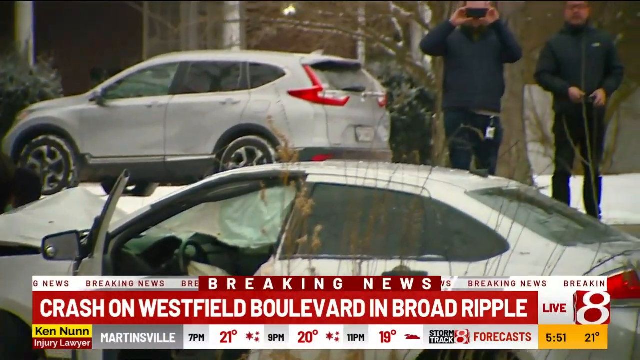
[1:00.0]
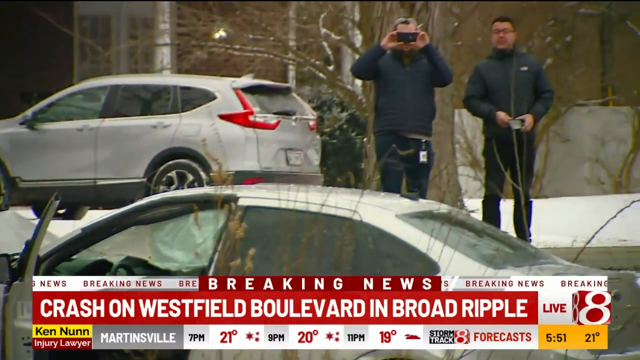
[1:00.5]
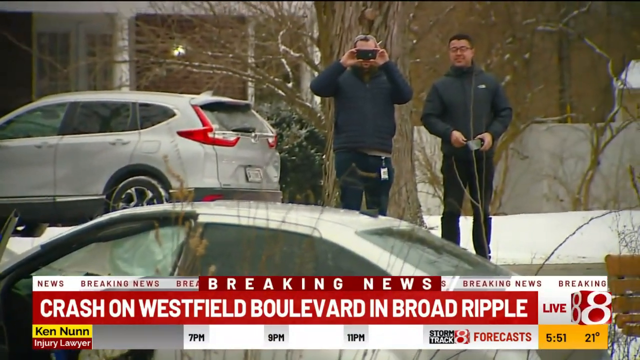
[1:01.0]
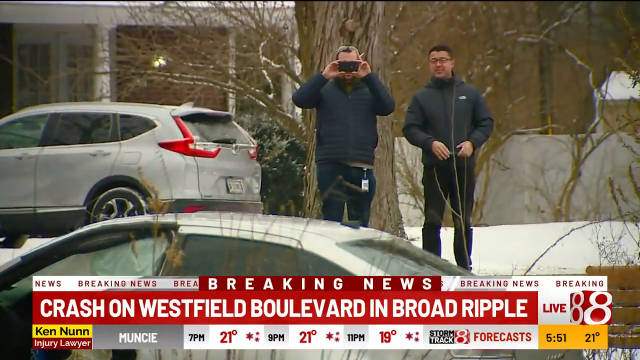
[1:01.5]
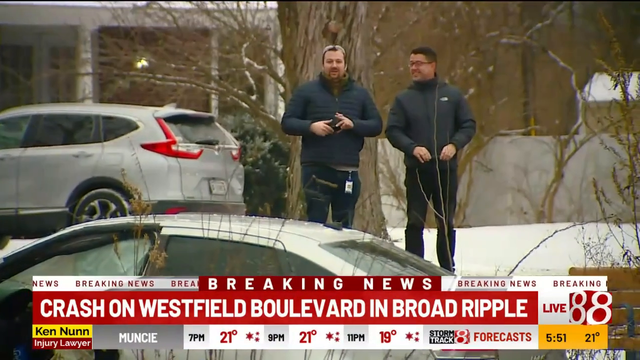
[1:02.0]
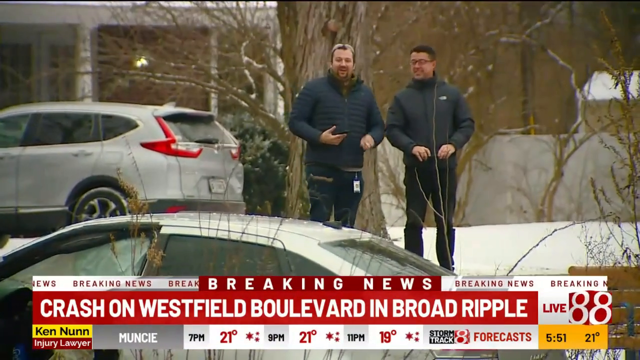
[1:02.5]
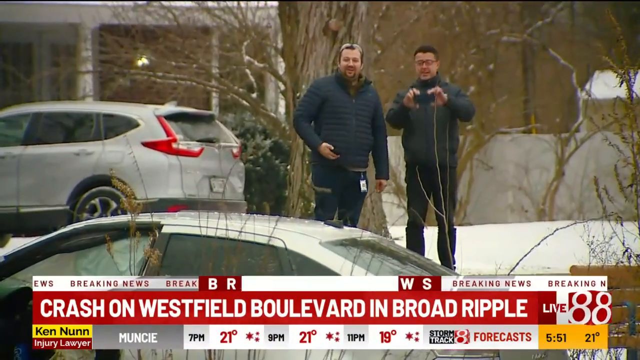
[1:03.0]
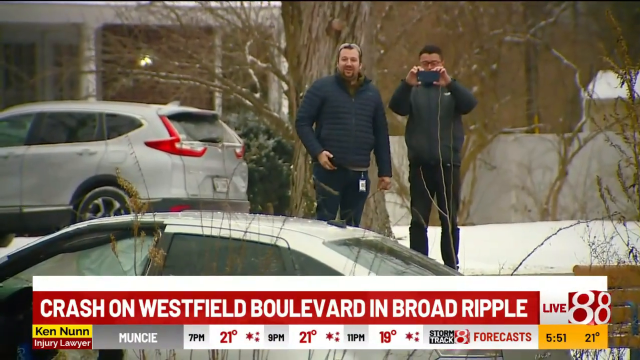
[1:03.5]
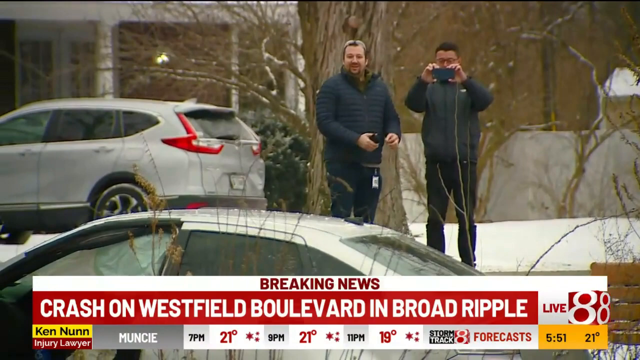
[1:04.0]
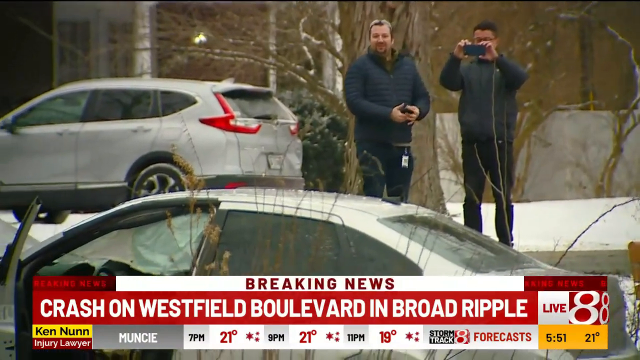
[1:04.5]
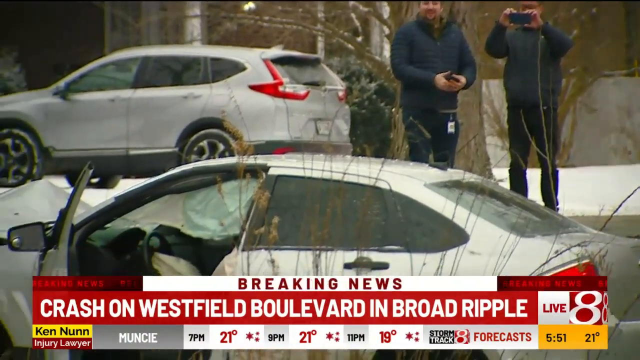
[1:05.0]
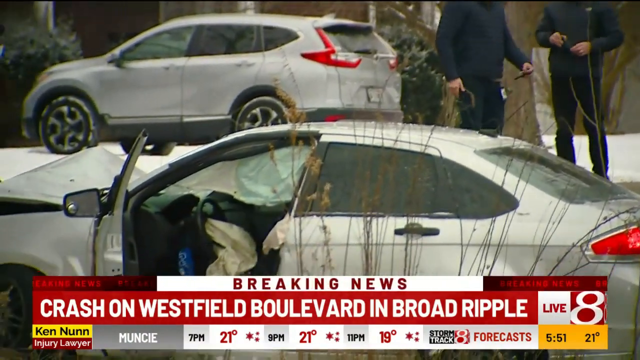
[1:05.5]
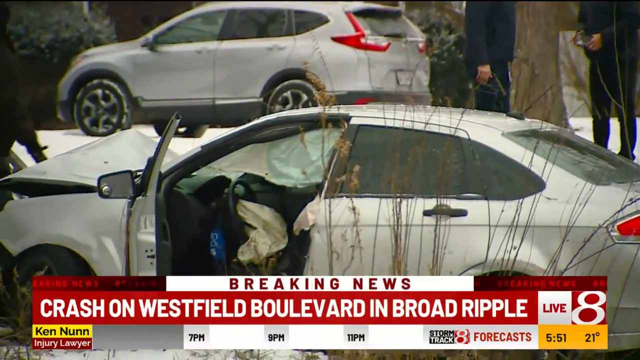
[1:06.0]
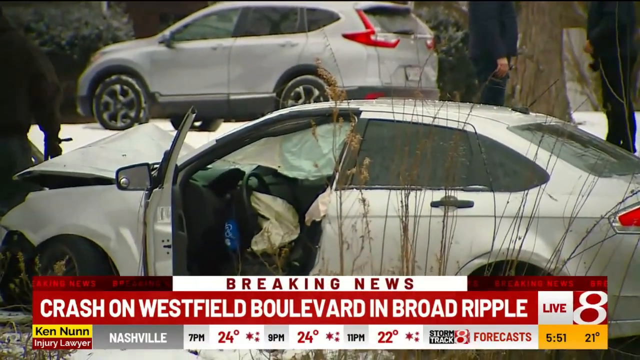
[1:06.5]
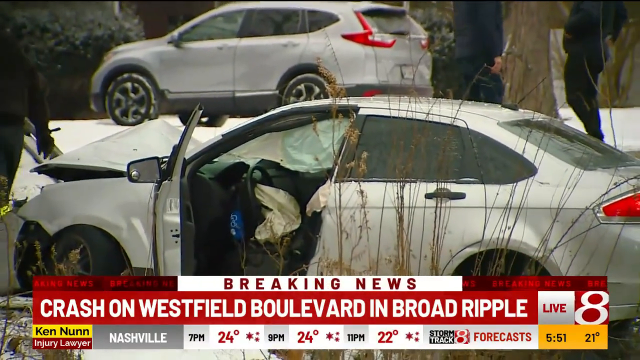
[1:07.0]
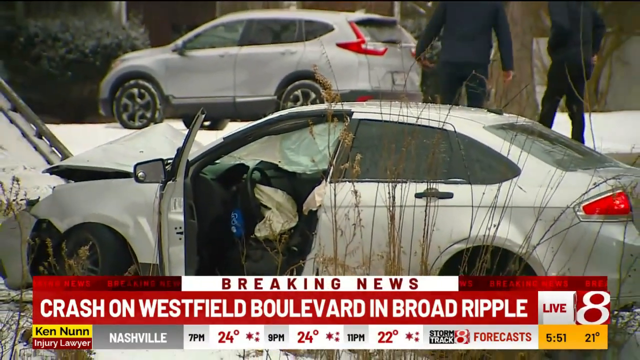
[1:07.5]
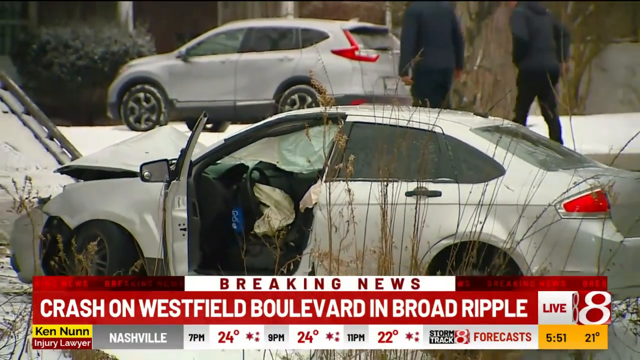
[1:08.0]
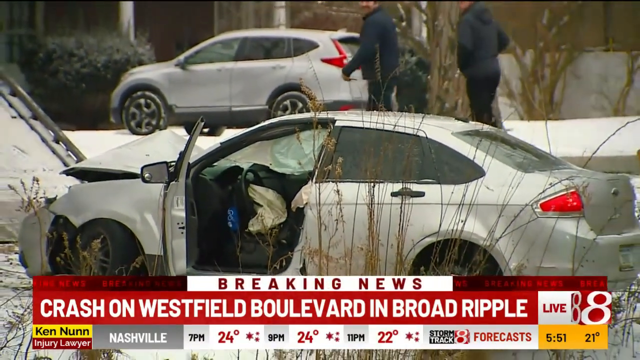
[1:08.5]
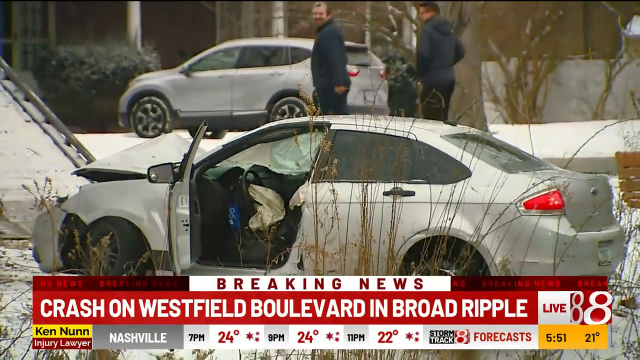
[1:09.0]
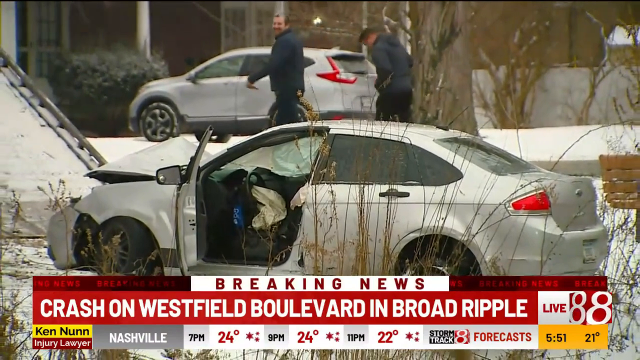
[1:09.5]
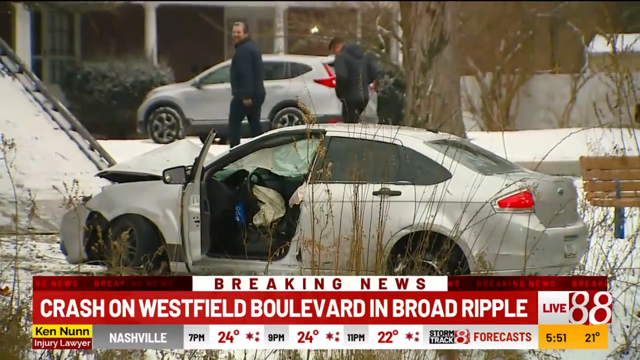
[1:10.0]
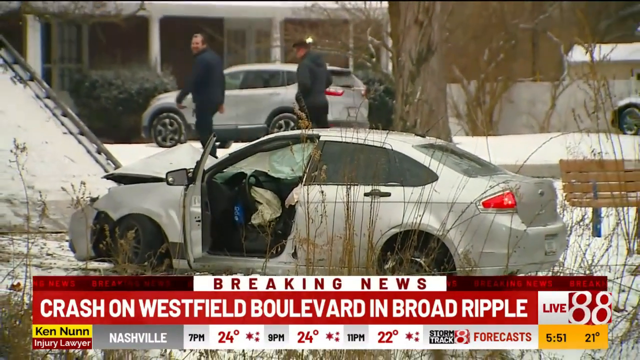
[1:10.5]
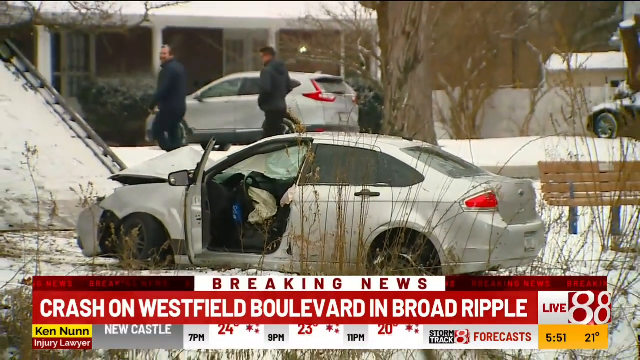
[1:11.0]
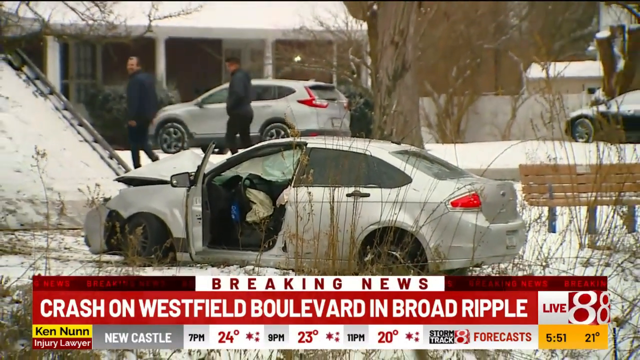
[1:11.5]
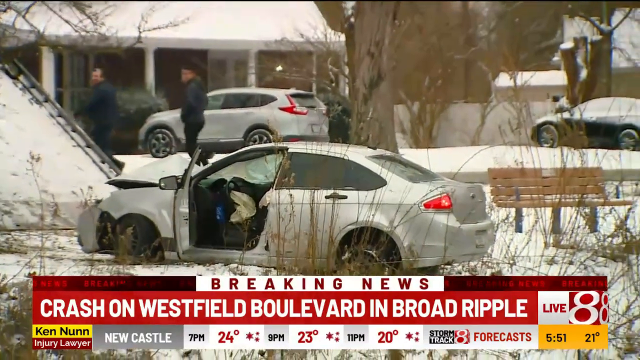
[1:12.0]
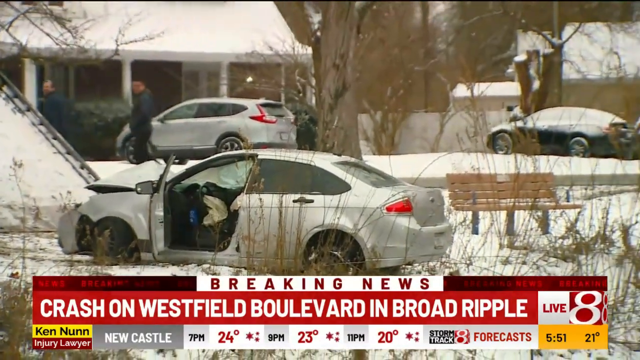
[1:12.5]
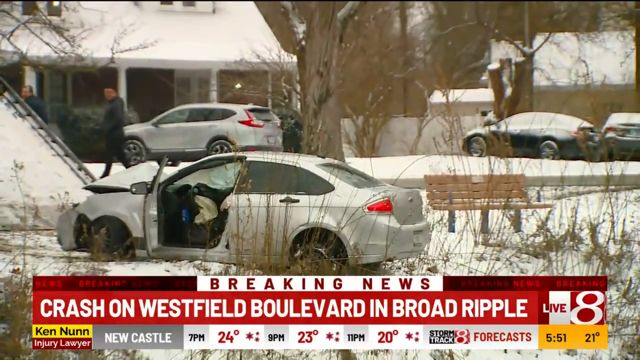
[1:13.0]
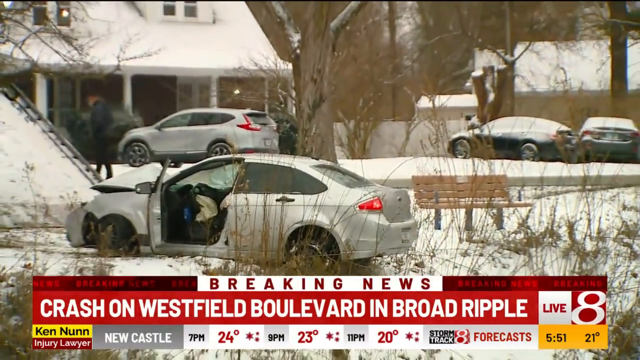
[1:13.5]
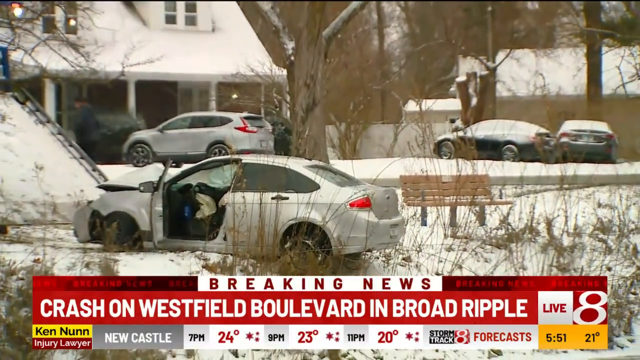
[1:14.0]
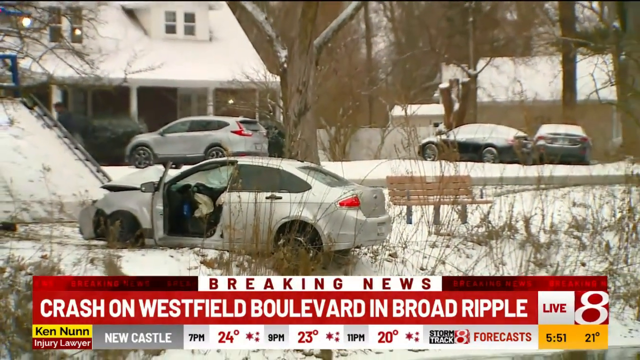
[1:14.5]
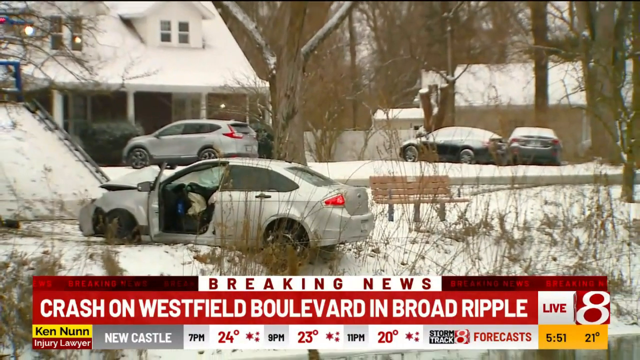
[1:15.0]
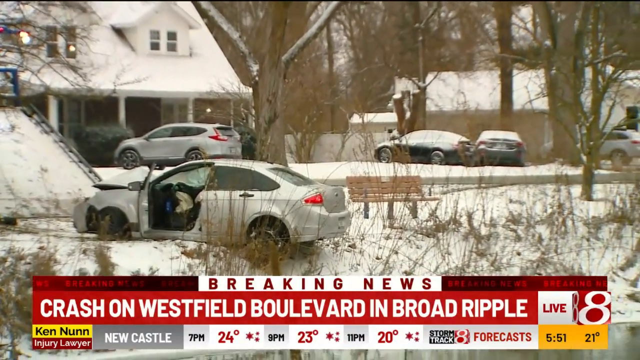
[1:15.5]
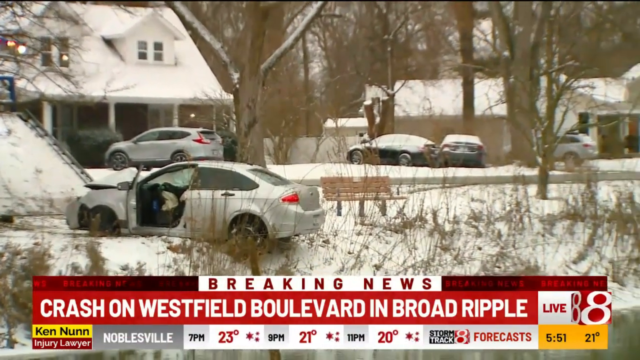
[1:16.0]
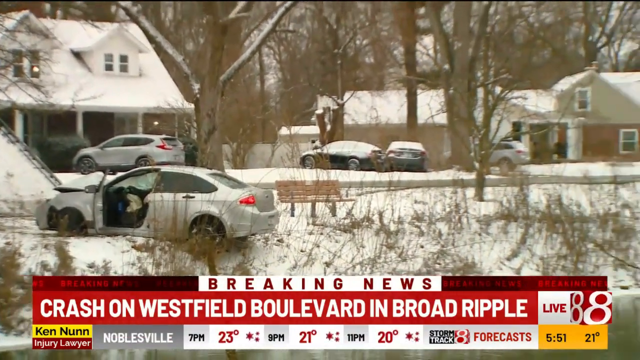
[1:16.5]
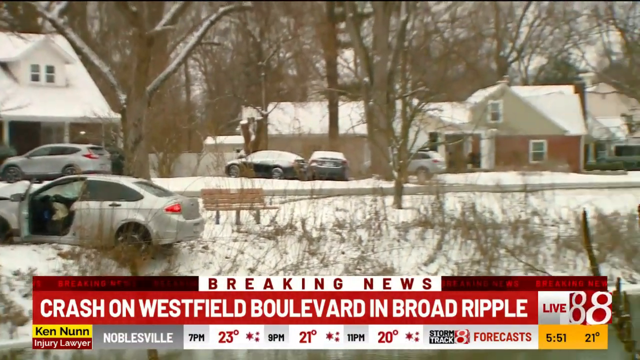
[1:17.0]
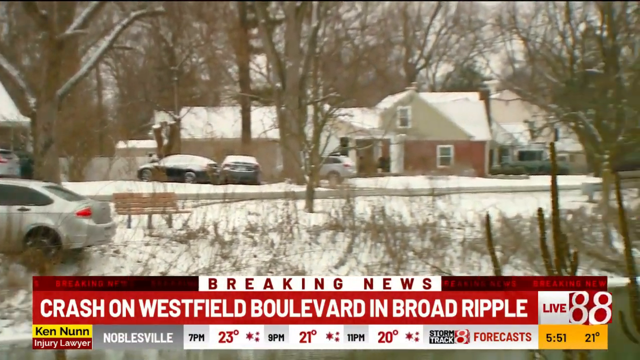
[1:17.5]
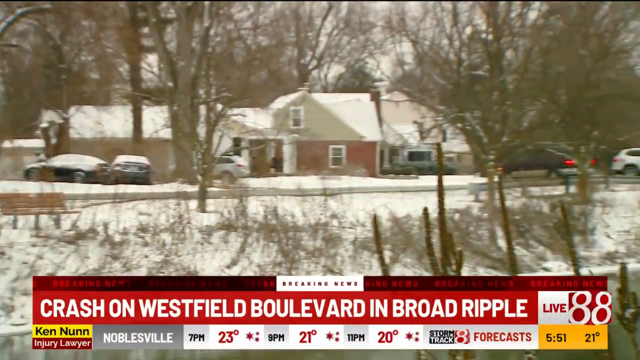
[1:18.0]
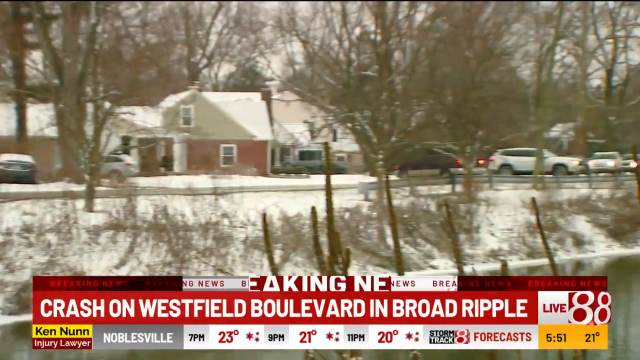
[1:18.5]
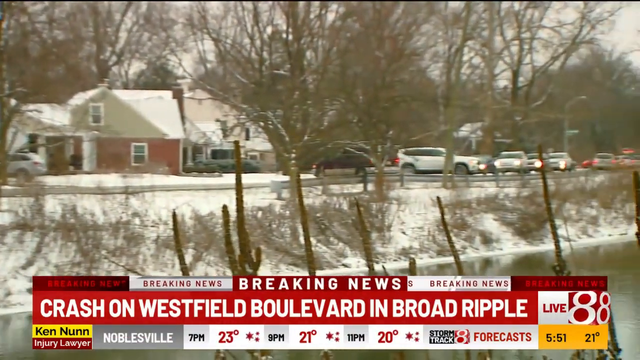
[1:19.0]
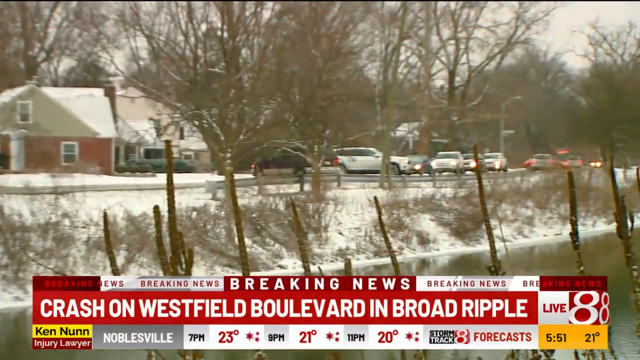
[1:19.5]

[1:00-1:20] The headline reads "Breaking news. Crash on Westfield Boulevard in Broad Ripple" on channel Live 8, with a temperature of 21 degrees and a time of 5:51. A car has come off the road in an accident; its front end is badly damaged, the door is open and the airbags have been deployed. People are working on the car to get it onto a recovery vehicle. There is a lot of snow on the ground. The camera pans across to a river and to cars on the road near the accident, which look like they are being held up; some turn around and go away from the scene. The scene is very cold and icy.